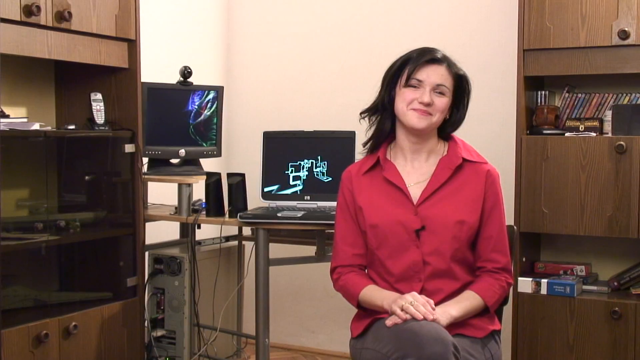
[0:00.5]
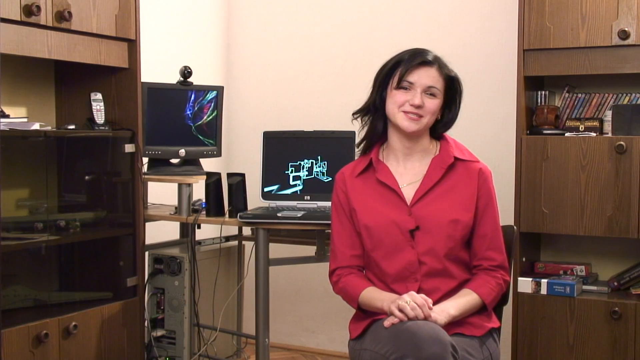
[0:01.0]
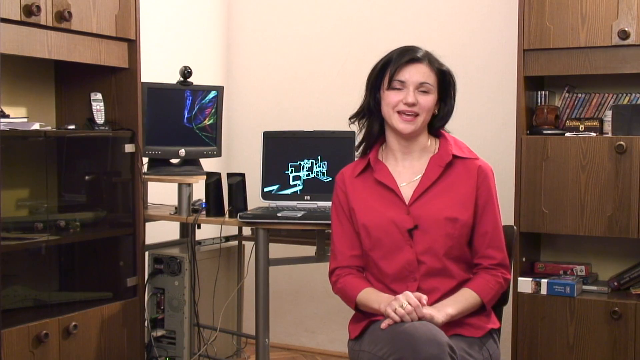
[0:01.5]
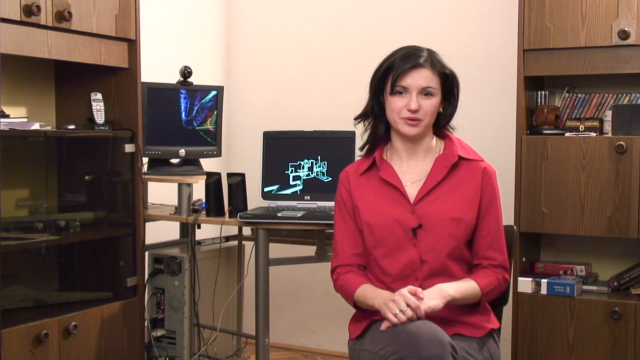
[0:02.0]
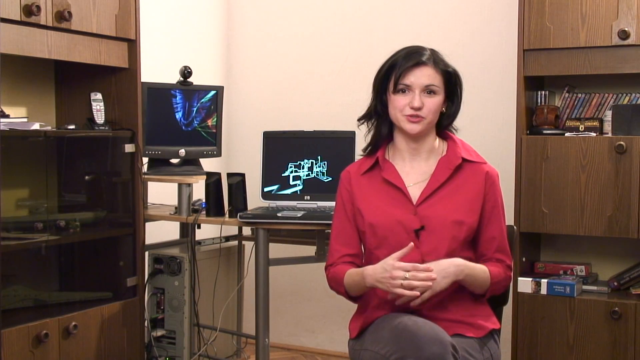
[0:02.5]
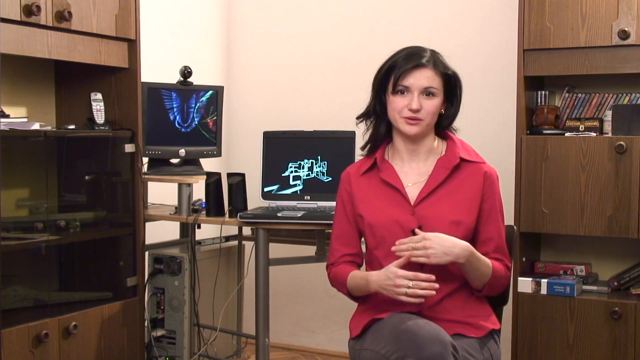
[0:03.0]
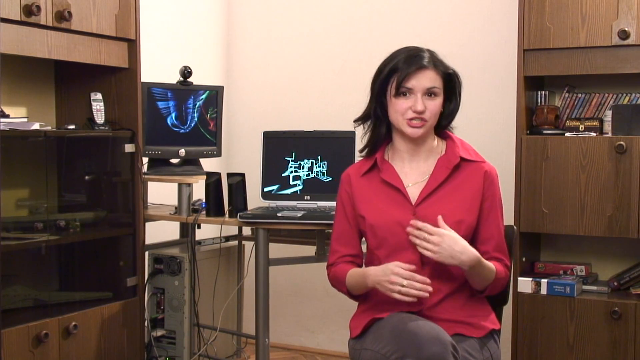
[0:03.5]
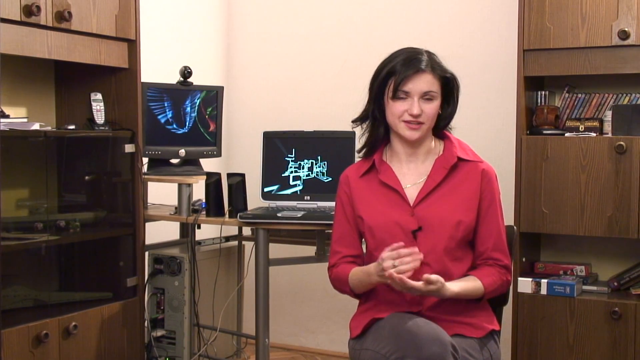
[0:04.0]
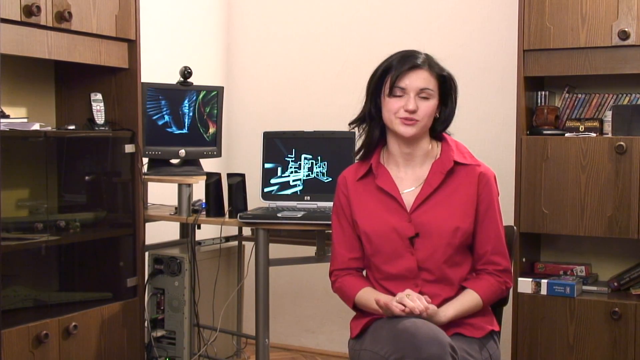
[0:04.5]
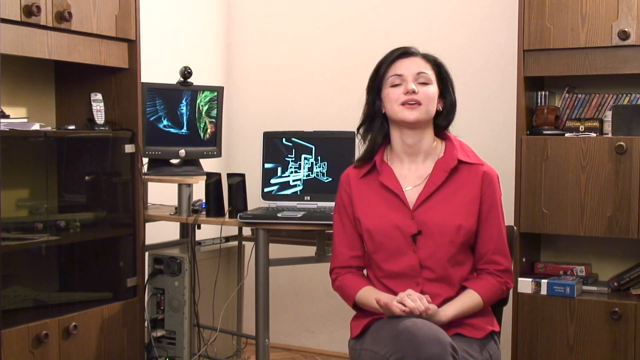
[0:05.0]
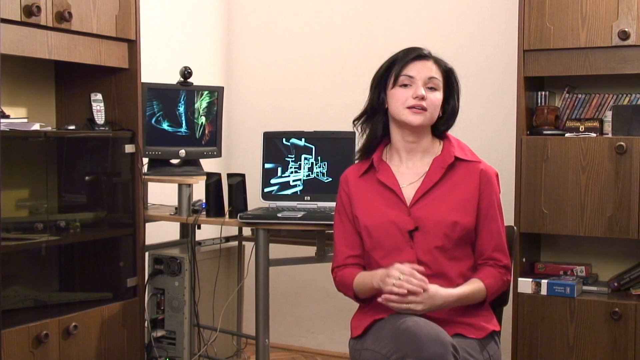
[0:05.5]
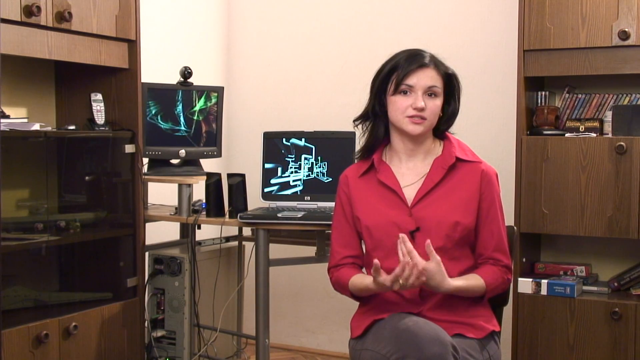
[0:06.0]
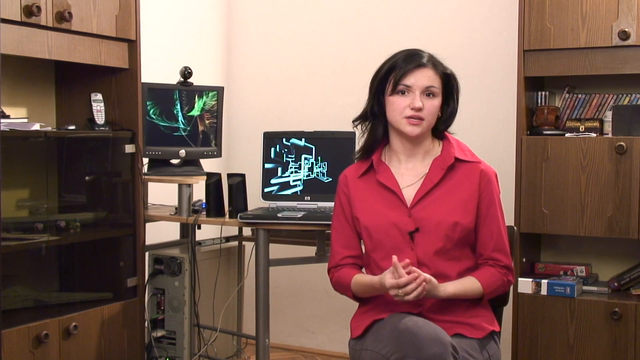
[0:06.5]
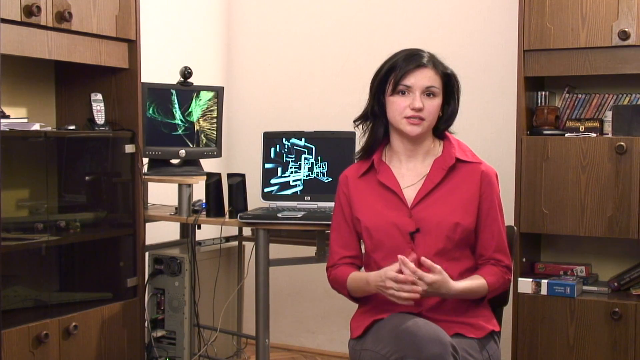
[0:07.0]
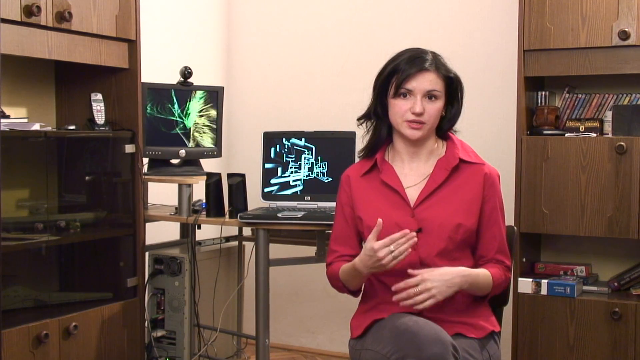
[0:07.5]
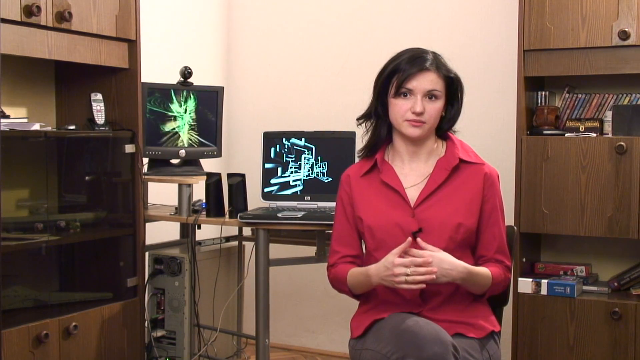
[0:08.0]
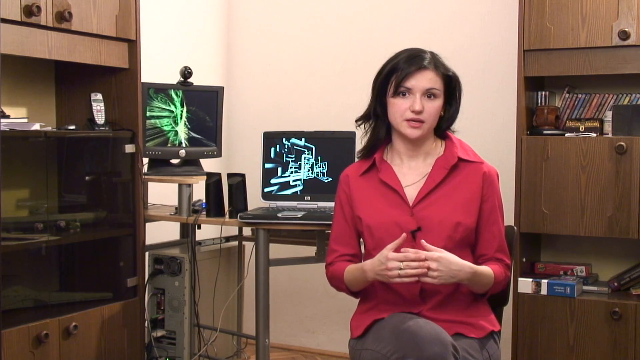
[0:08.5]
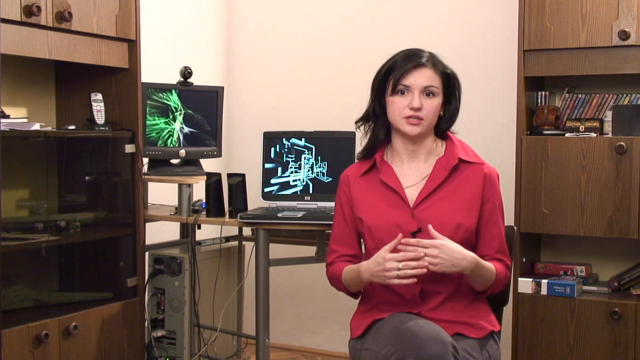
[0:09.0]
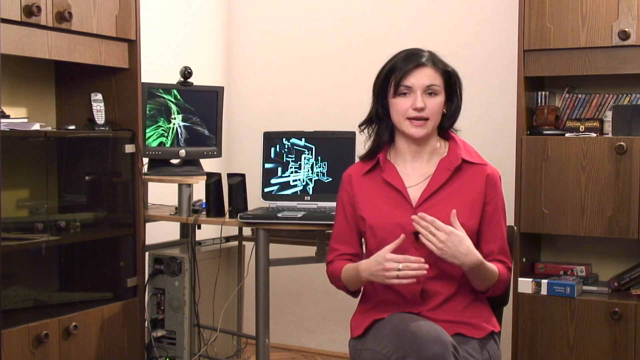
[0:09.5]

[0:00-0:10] A woman in a red dress shirt, buttoned down on the first two buttons, sits in a chair in what looks to be an office. She has dark brown hair and wears a necklace. Behind her are two computer monitors, with two speakers to the left of the computer monitor and a keyboard in front of them. A camera is on top of one of the monitors. To her right in the back is a brown wooden cabinet with many CDs on it, and to the left of that is another cabinet with a cell phone on it.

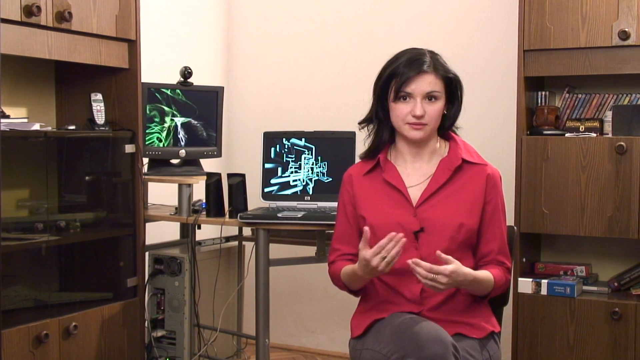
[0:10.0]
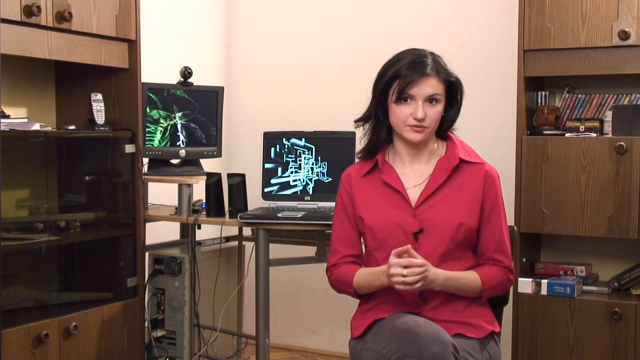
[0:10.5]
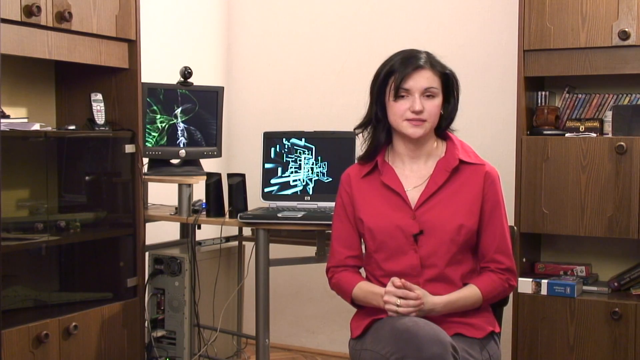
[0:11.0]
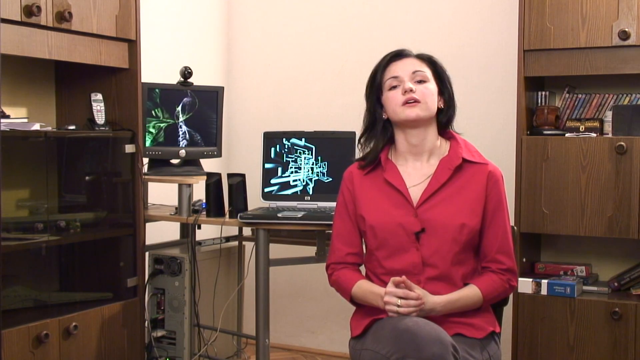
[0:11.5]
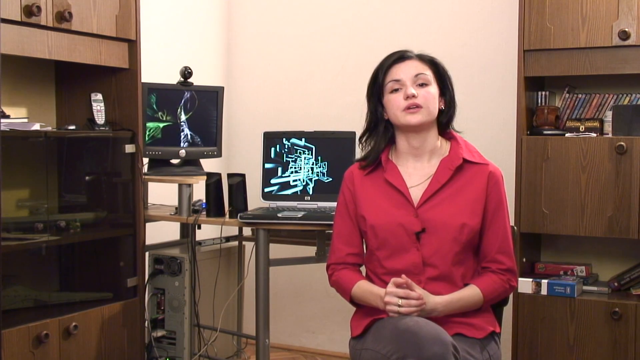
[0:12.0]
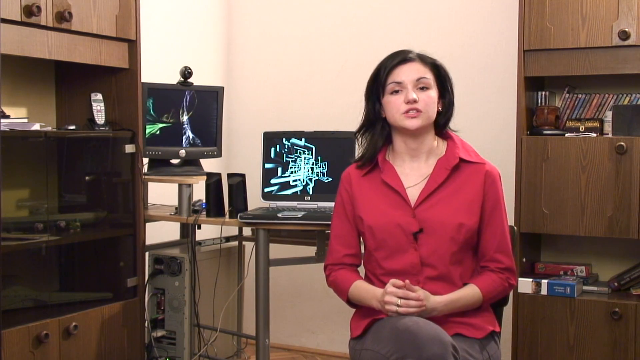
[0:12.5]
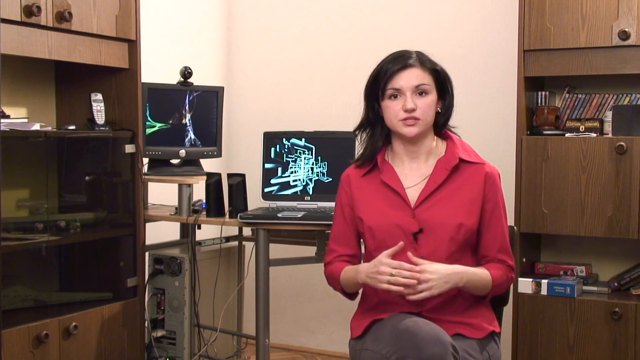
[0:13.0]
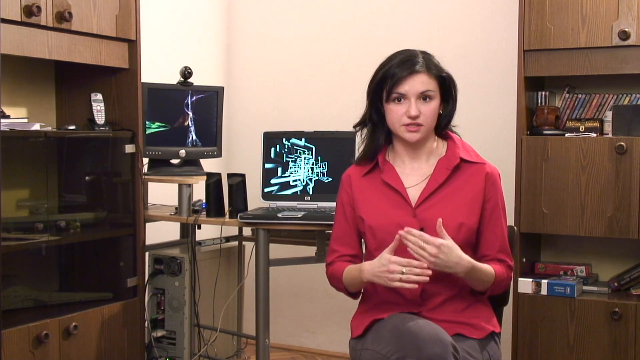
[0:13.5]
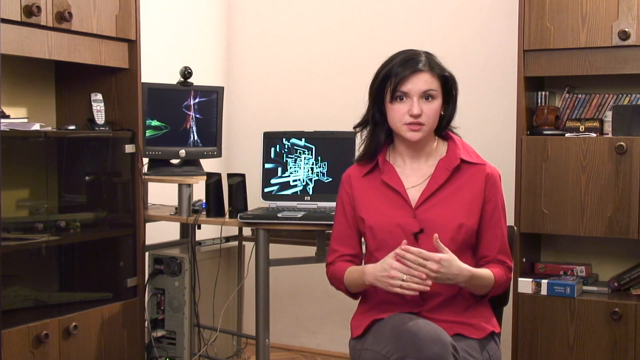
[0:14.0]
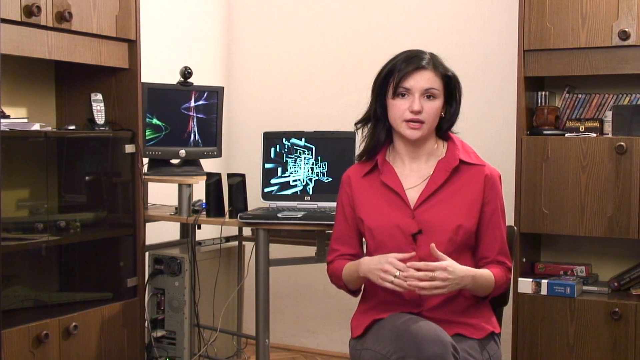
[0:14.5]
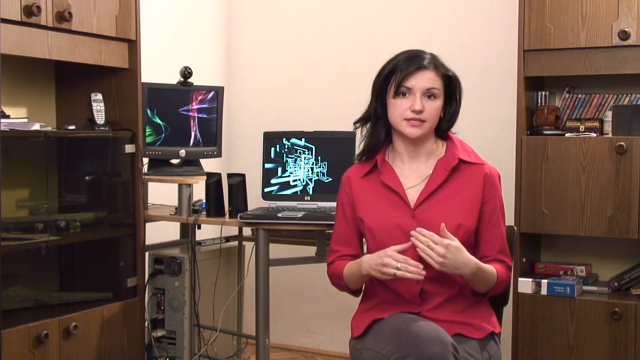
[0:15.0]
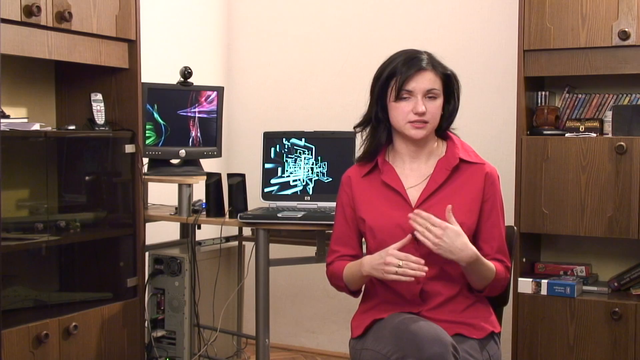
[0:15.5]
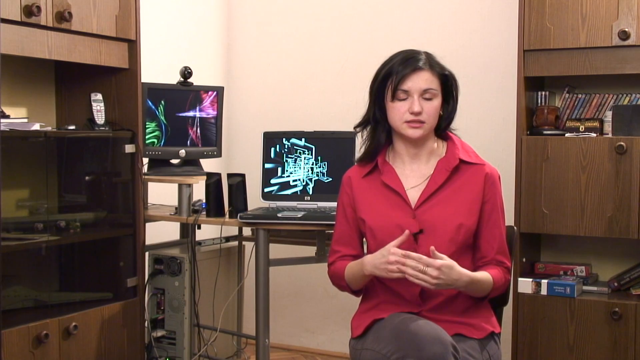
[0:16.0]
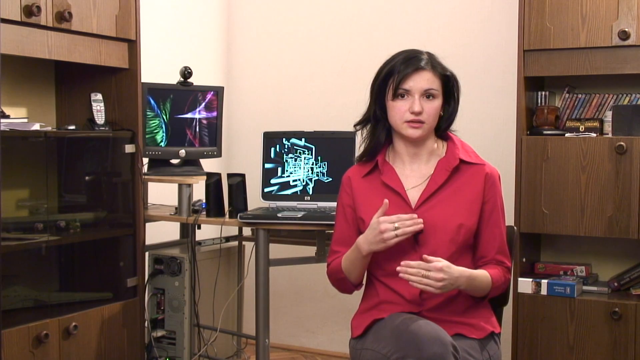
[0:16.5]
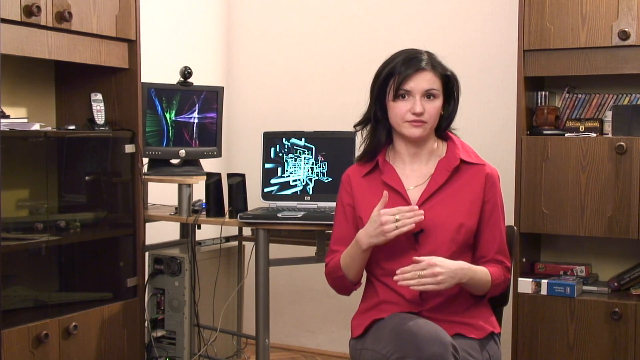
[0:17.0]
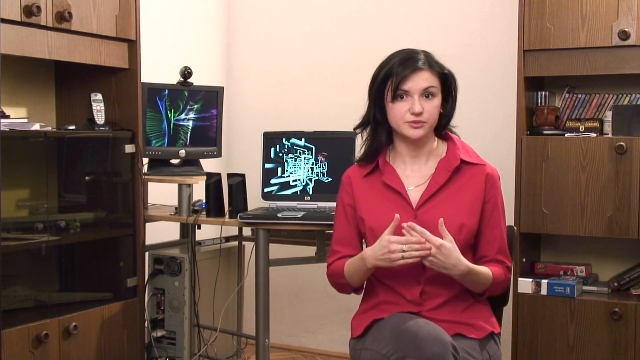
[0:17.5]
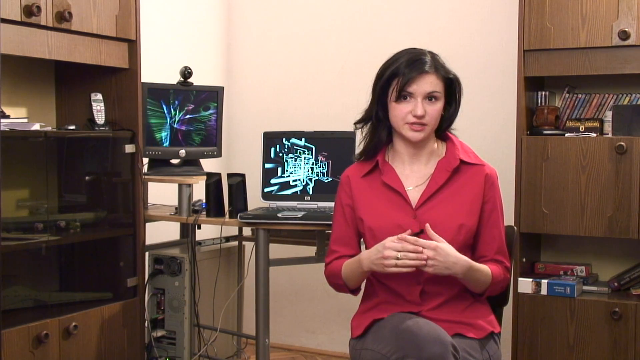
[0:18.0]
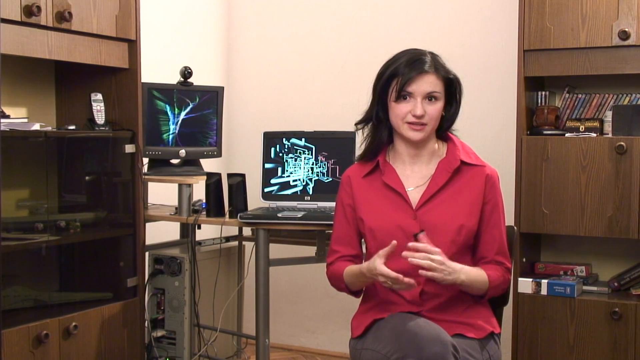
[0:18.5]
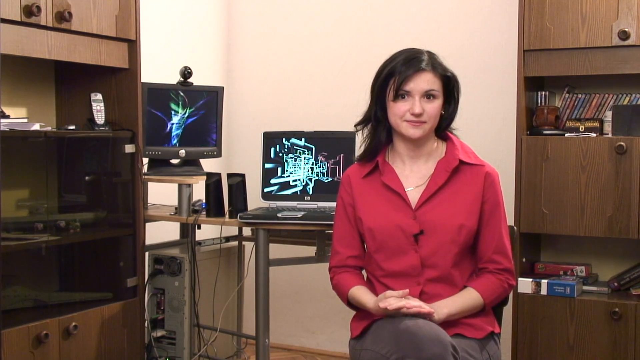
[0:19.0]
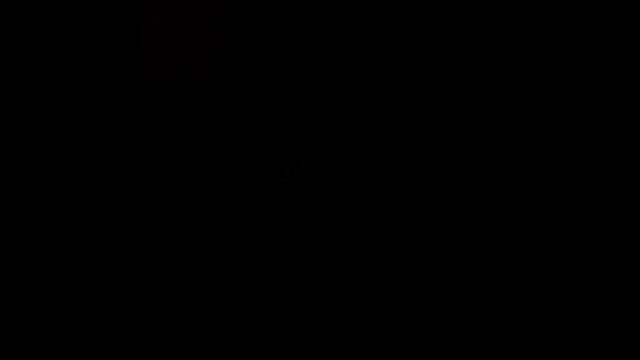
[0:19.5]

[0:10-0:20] The woman in the buttoned-down red dress shirt, with dark brown hair, continues speaking to the camera, seemingly explaining something and using her hands as she talks. The sleeves of her dress shirt are rolled back, and she sits with one leg over the other. The two computer monitors behind her have their screens on, showing a sleep screen background with green lines waving across the screen.